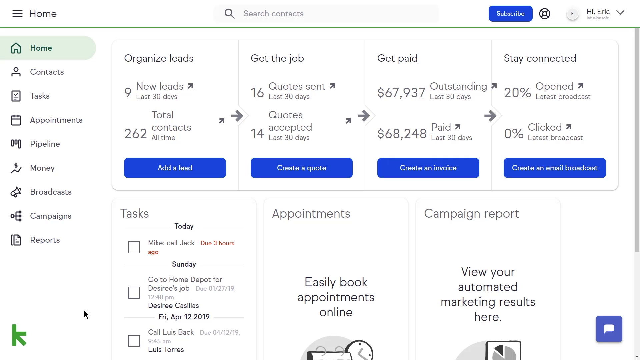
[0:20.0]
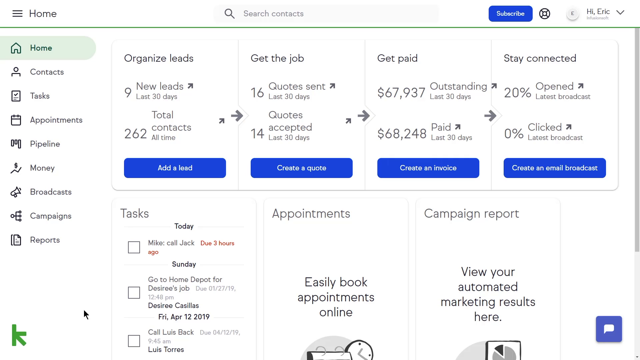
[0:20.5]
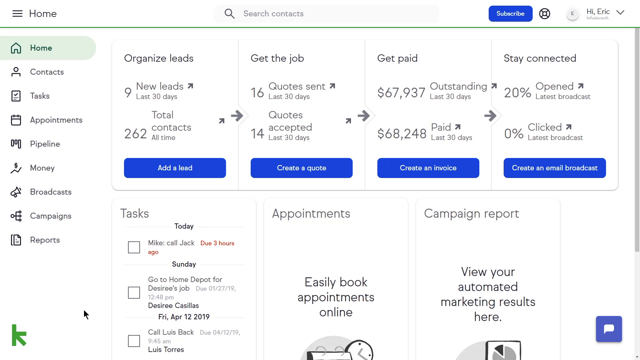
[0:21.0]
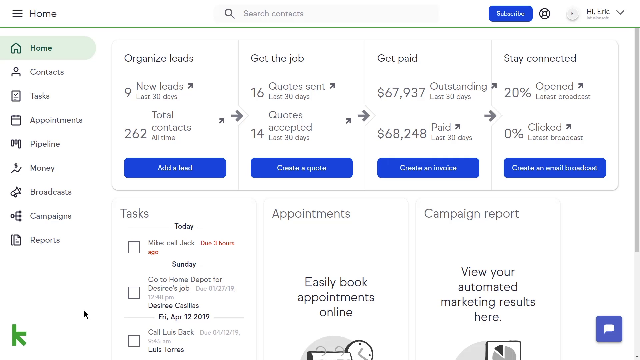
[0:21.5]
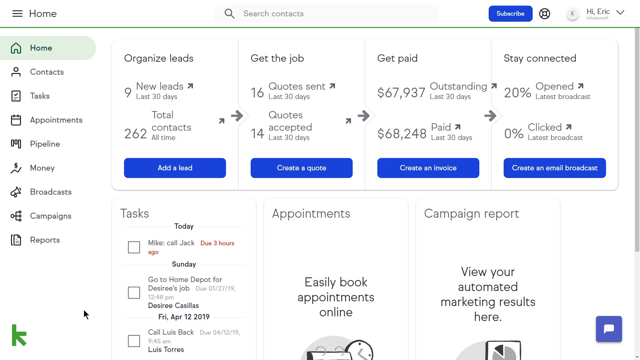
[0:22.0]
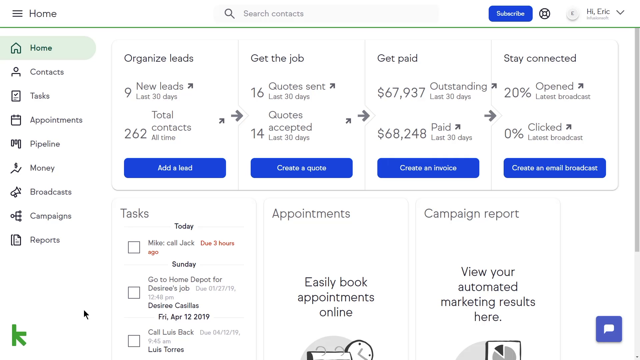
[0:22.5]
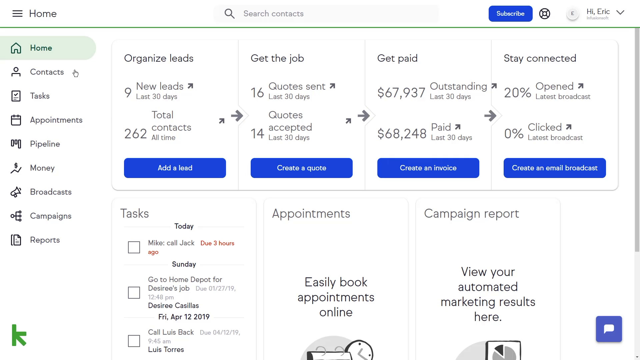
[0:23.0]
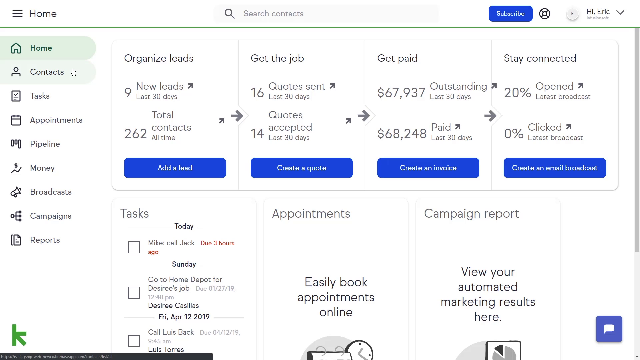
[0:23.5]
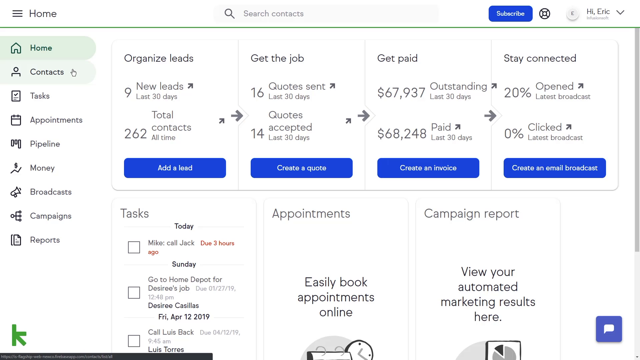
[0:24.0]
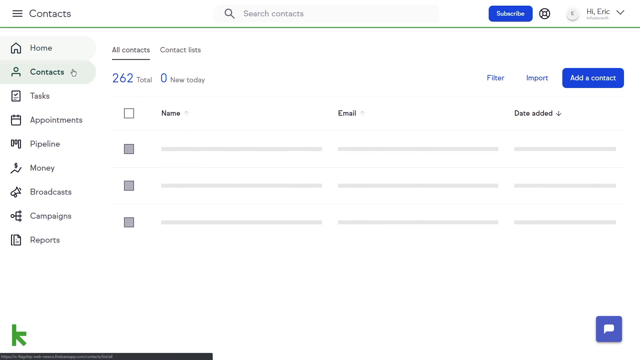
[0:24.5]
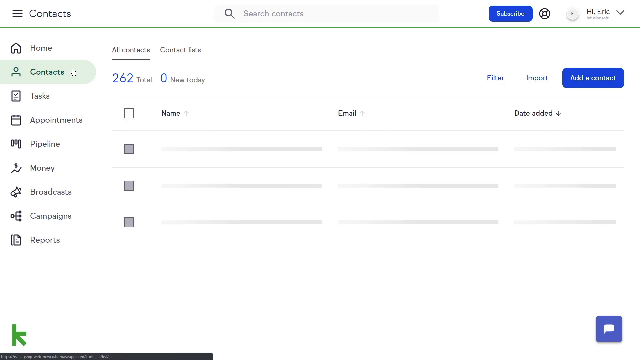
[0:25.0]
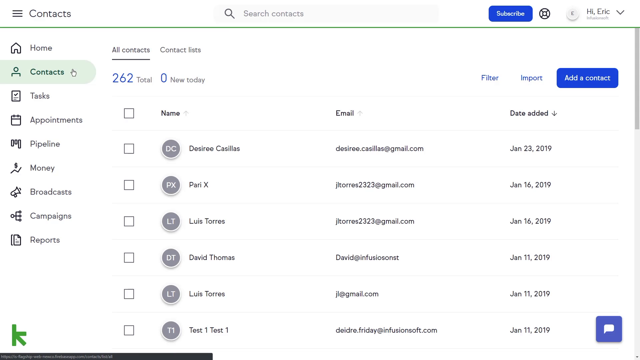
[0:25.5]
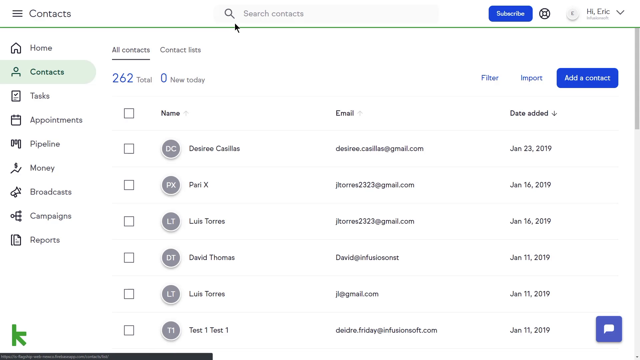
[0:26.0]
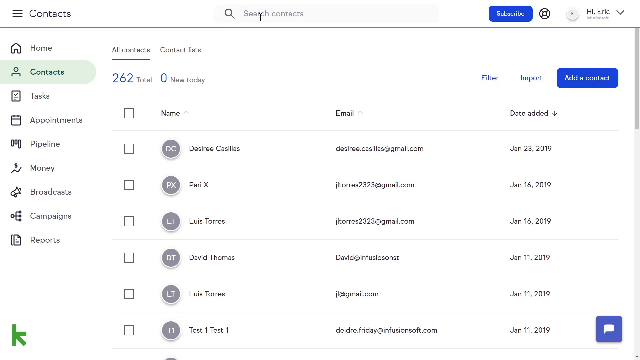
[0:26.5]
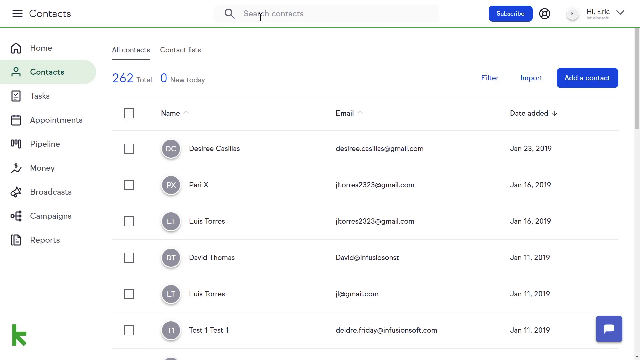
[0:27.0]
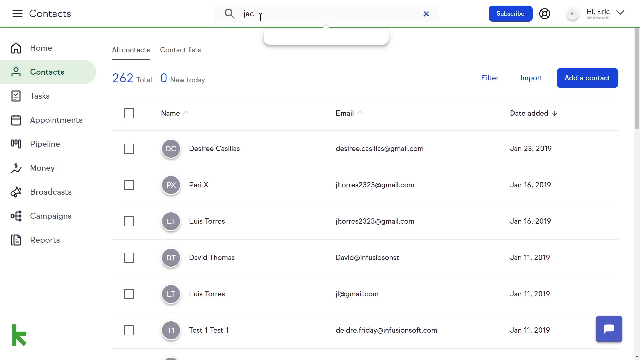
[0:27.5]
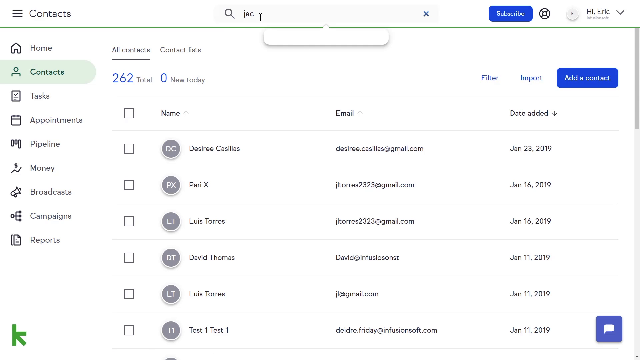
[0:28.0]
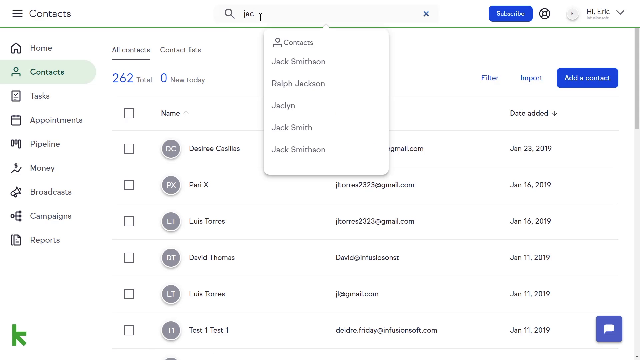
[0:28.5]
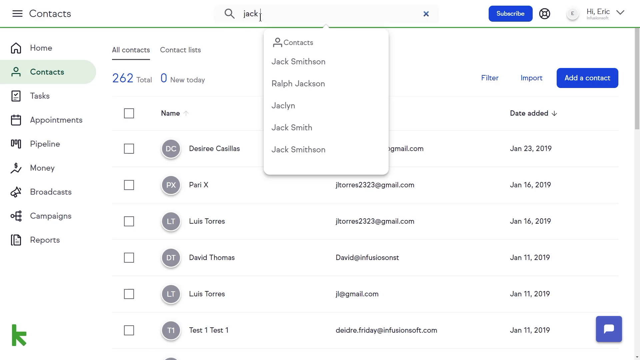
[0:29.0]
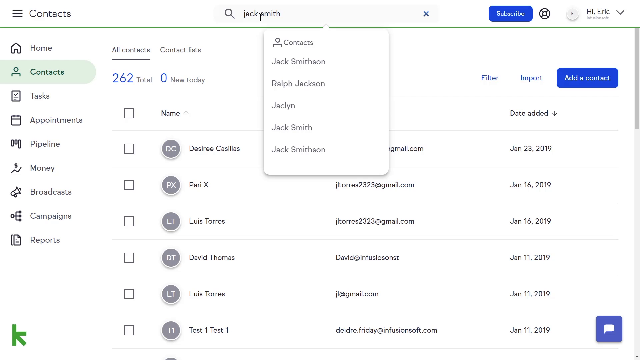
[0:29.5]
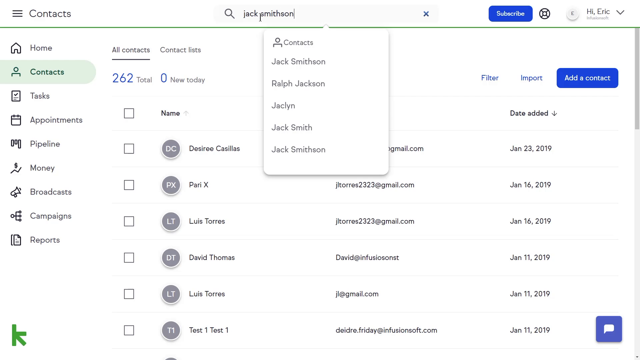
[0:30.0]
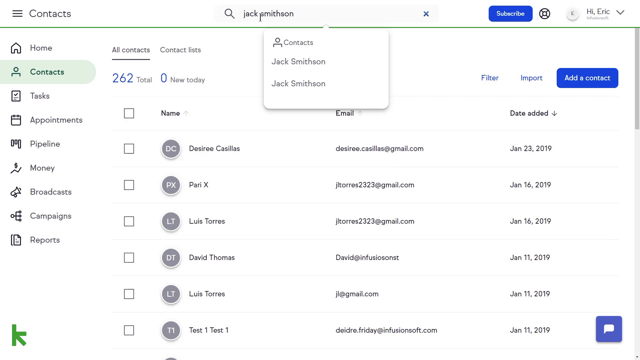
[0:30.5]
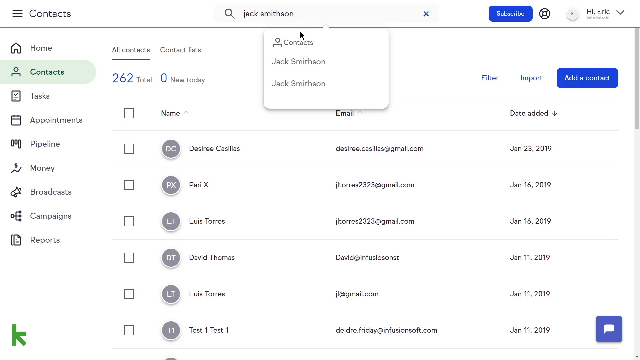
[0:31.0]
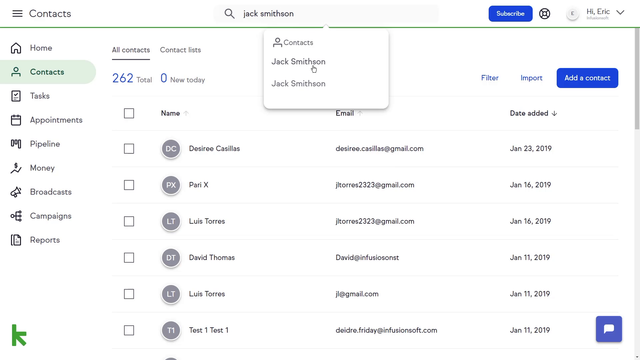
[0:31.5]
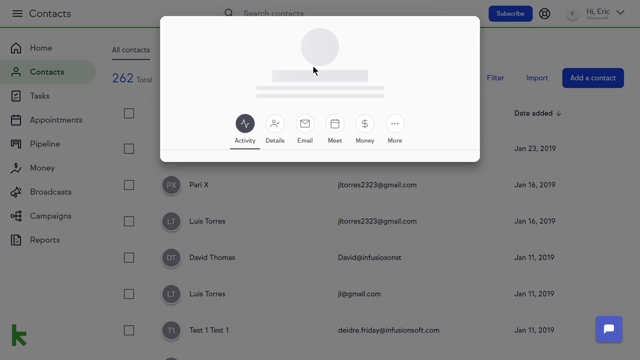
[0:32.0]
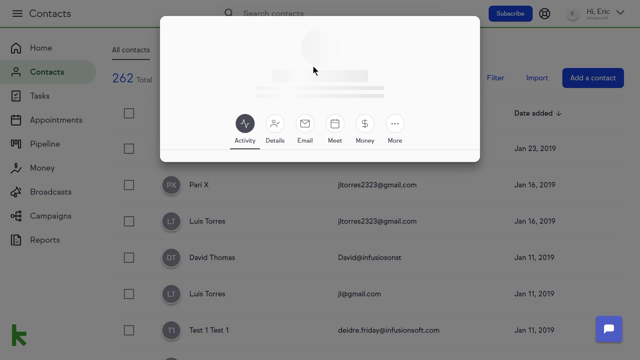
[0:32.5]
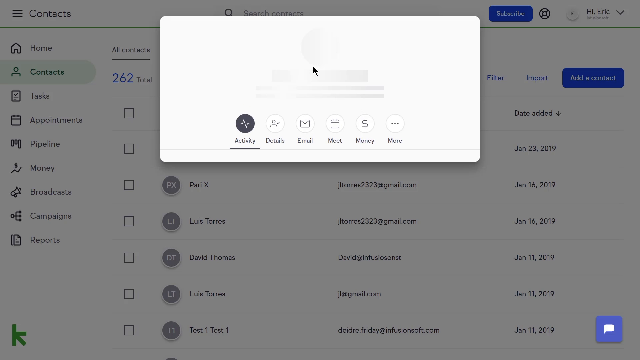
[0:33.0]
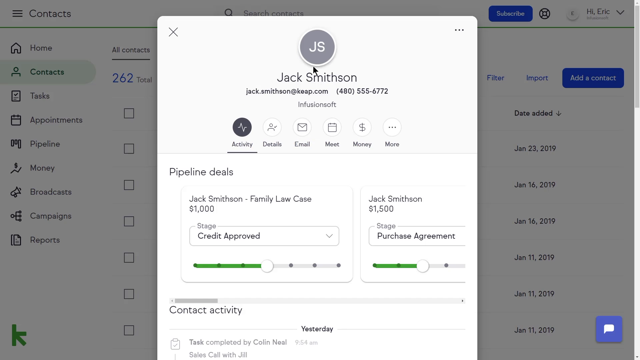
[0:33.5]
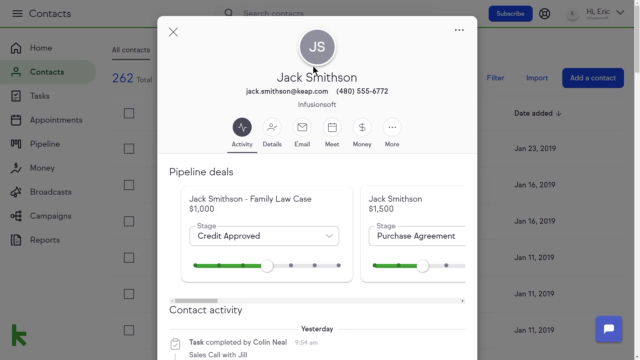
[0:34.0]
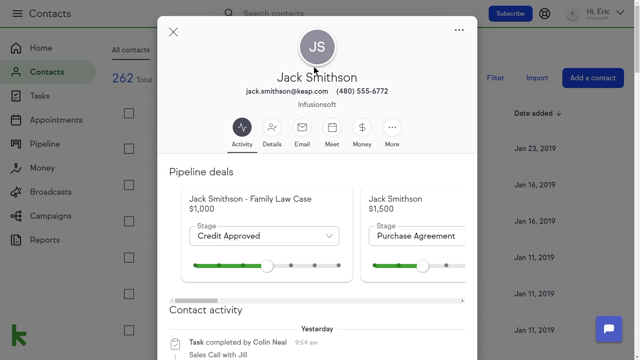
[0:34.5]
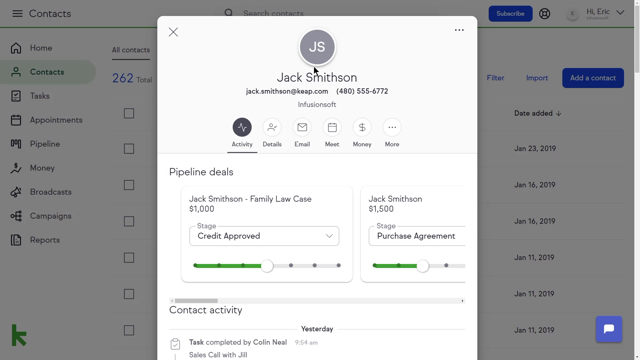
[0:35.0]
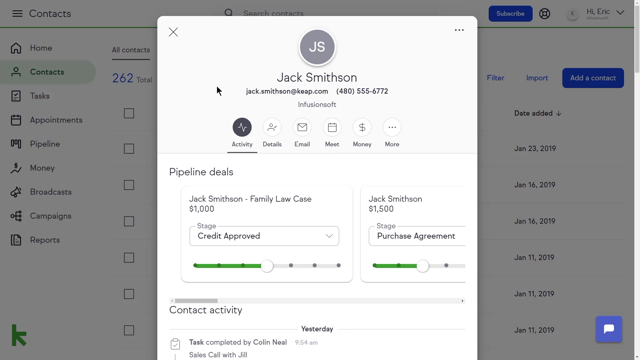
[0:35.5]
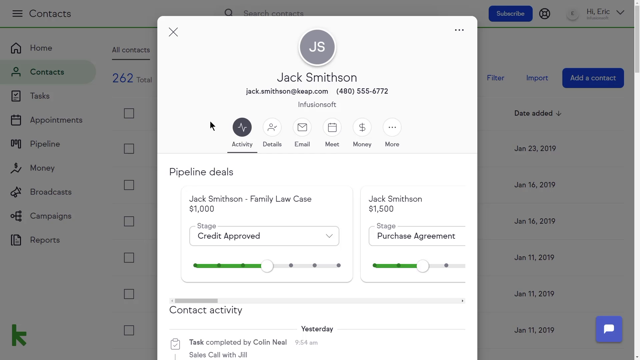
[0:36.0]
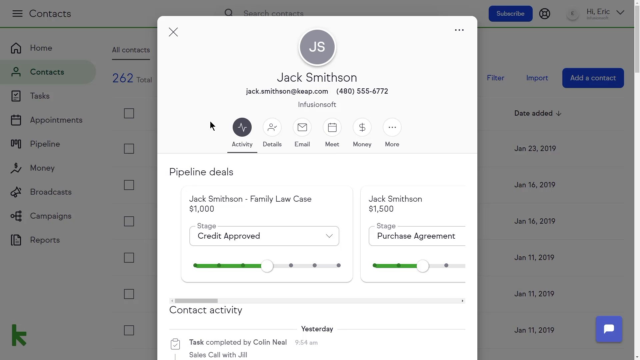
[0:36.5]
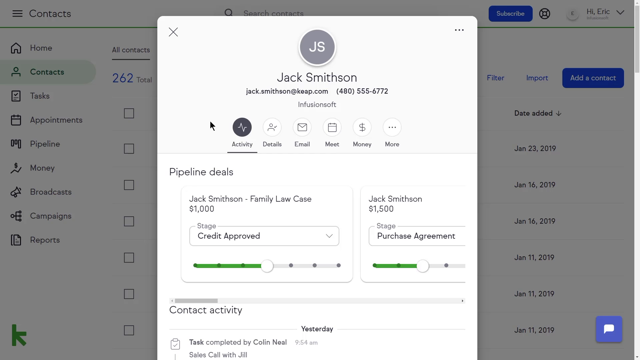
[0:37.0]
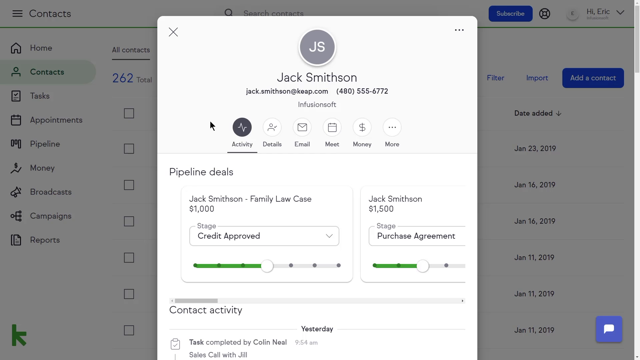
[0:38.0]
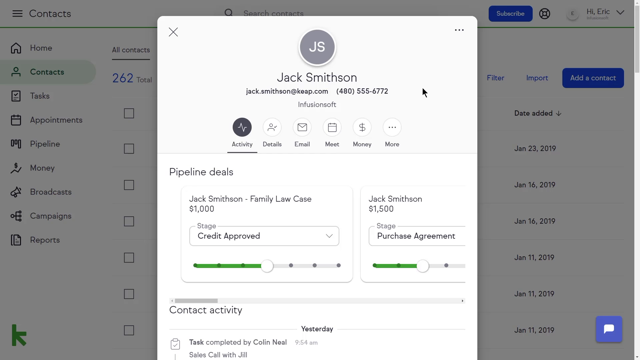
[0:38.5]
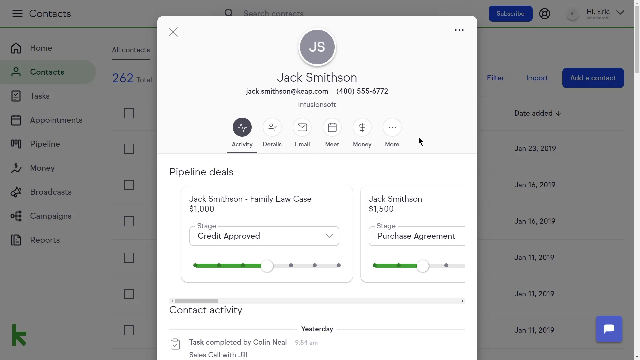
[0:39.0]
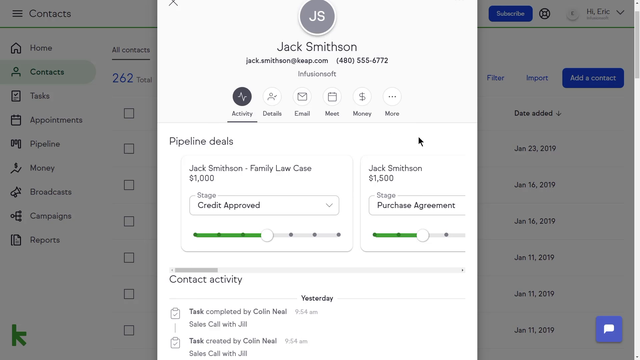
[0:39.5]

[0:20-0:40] The computer program's interface is centered on organizing leads, getting the job, getting paid, and staying connected. Under the organize leads category, information states that nine new leads were gained in the last 30 days, with 262 total contacts all time. Under the get the job category are 16 quotes sent in the last 30 days and a figure of 14 quotes in the last 30 days. Under get paid are $67,937 in outstanding balance and $68,248 paid in the last 30 days. Under stay connected, 20% opened the last broadcast and 0% clicked. Beneath each category is a large blue rectangular button with an action related to that category: "Add a lead" under organize leads, then "create a quote", "create an invoice", and fourth "create an email broadcast". The user's mouse moves up the left-hand menu and selects Contacts, and a contacts section appears, with the contacts taking up the middle portion of the interface. The user moves the mouse to the top search bar, enters one of the contacts, and clicks on it, bringing up specific information for that contact.